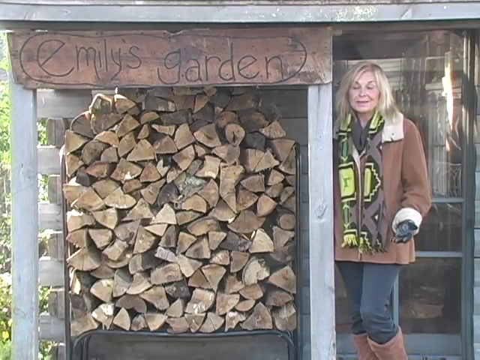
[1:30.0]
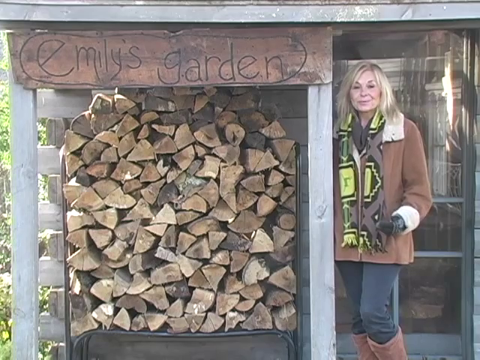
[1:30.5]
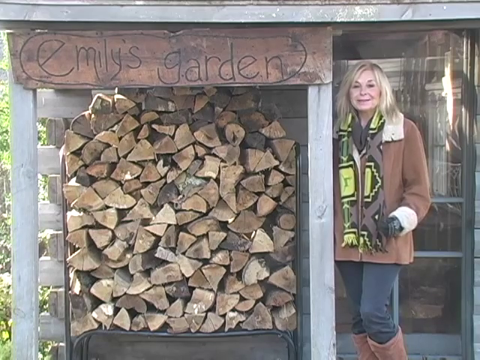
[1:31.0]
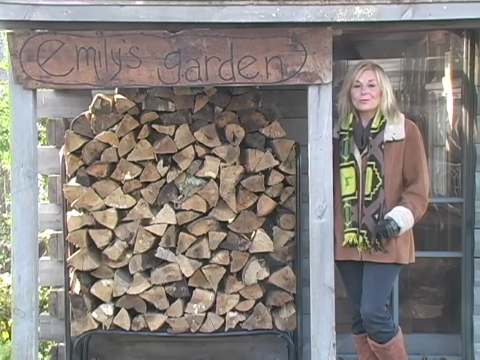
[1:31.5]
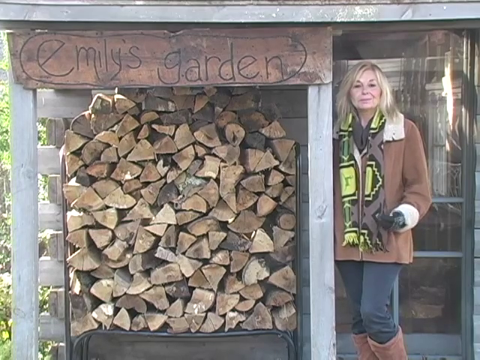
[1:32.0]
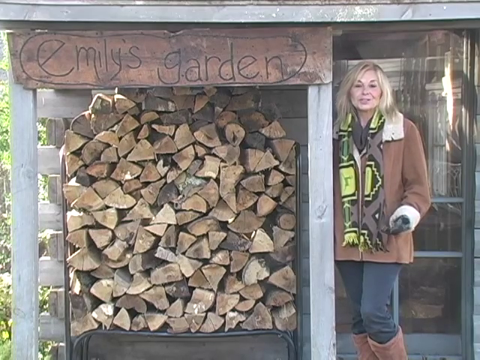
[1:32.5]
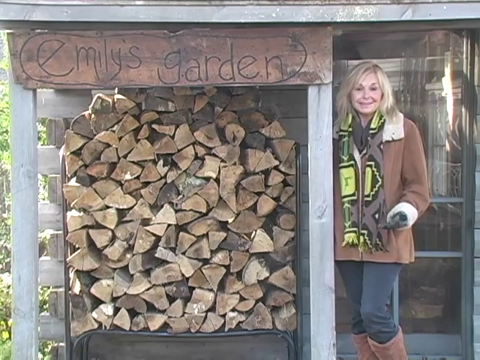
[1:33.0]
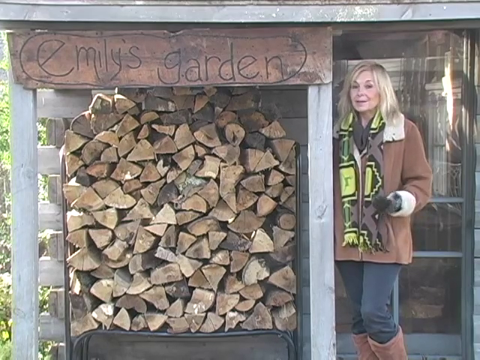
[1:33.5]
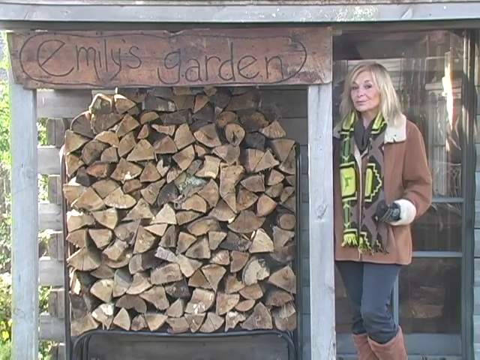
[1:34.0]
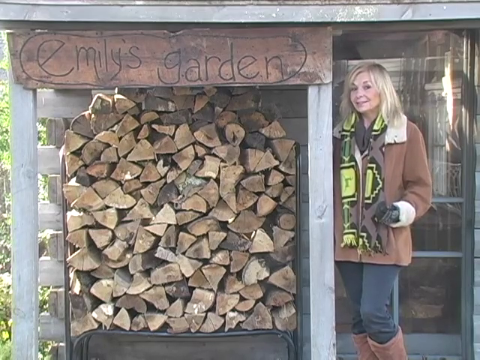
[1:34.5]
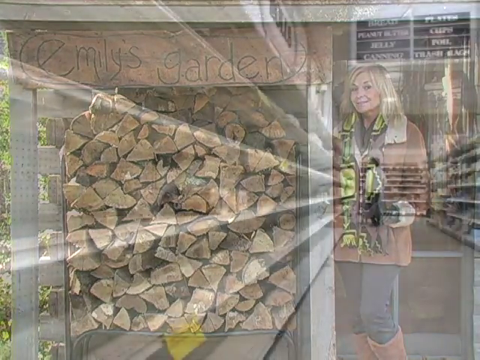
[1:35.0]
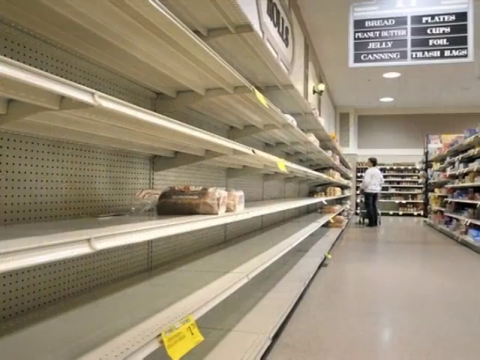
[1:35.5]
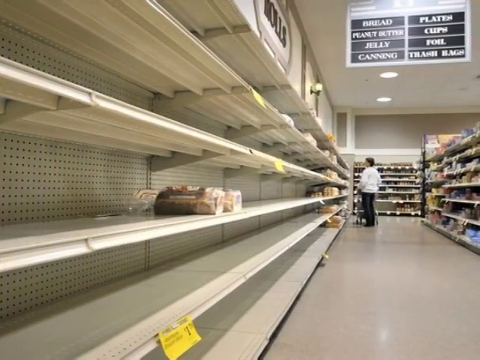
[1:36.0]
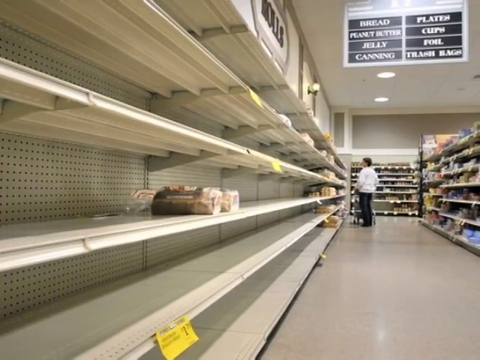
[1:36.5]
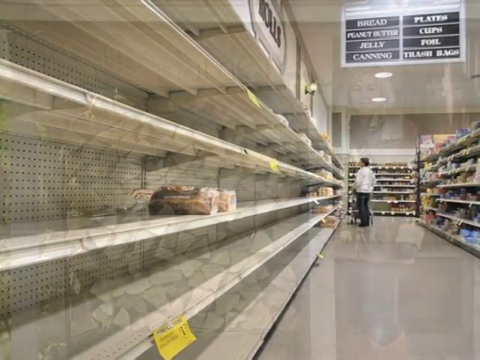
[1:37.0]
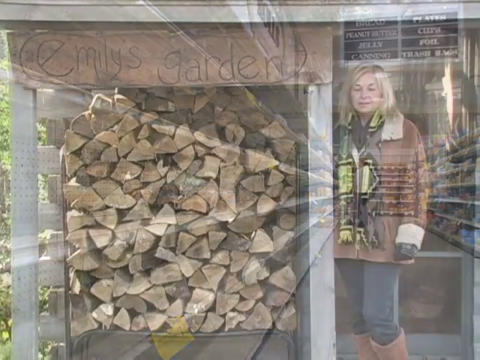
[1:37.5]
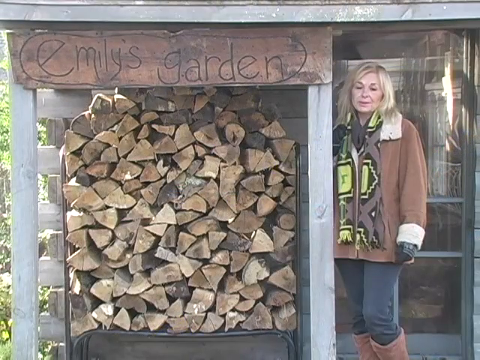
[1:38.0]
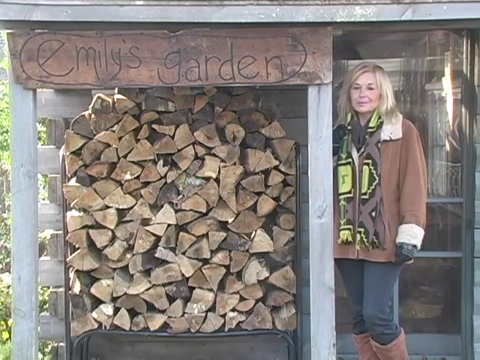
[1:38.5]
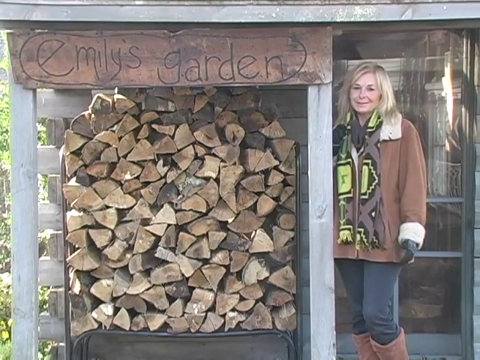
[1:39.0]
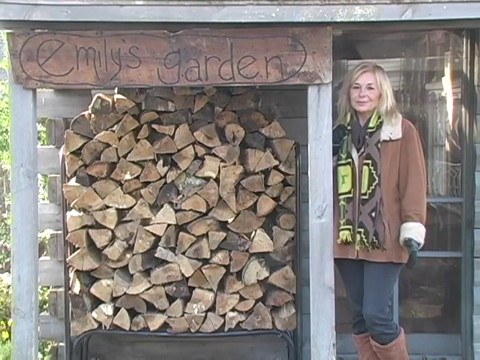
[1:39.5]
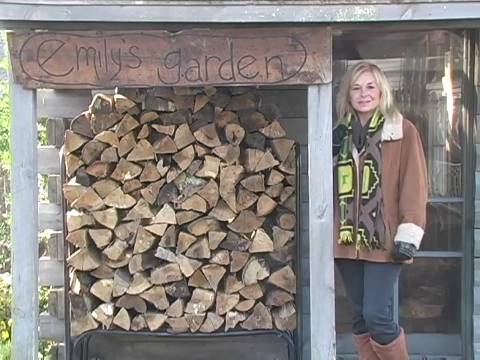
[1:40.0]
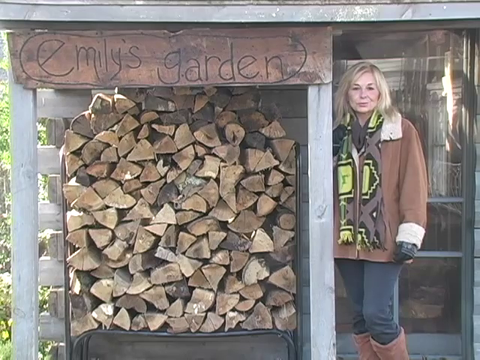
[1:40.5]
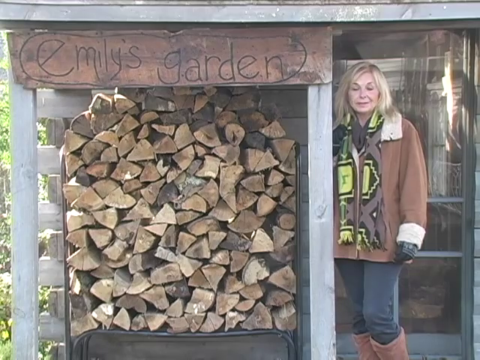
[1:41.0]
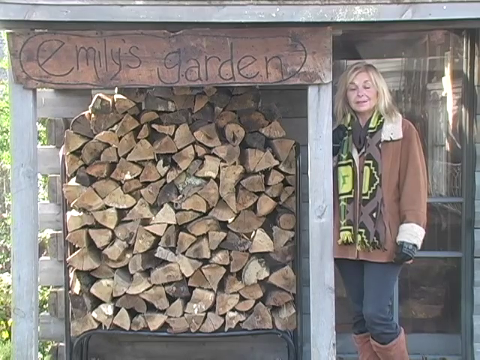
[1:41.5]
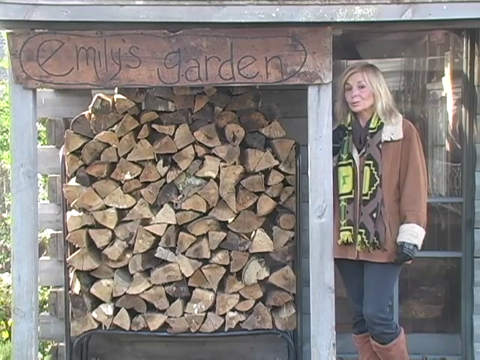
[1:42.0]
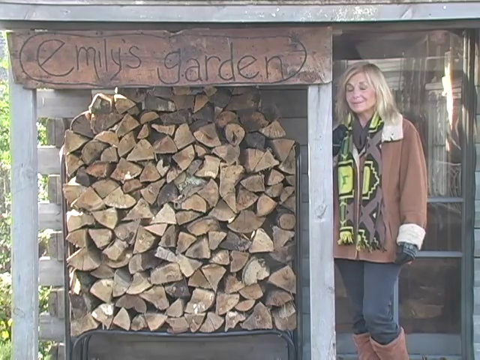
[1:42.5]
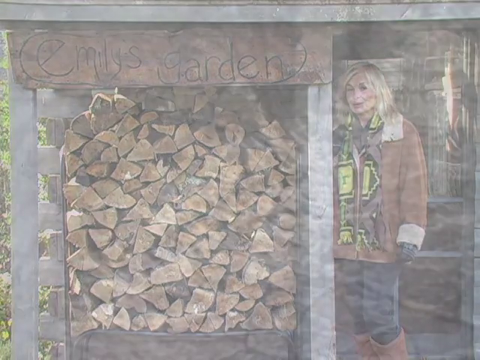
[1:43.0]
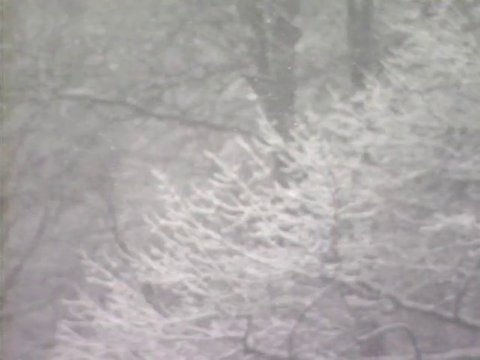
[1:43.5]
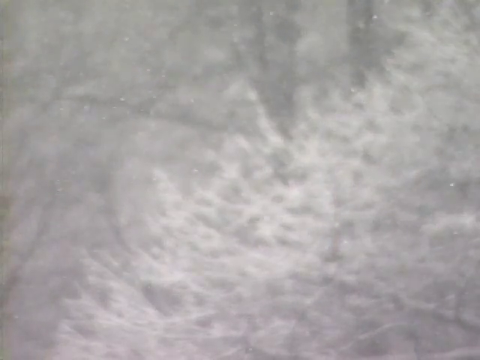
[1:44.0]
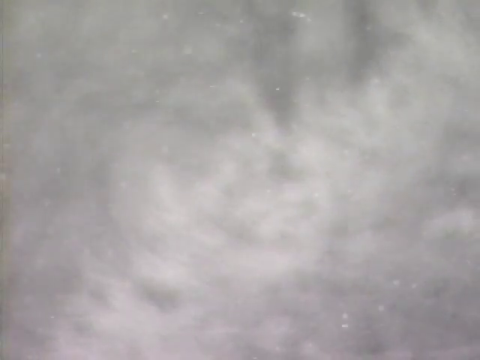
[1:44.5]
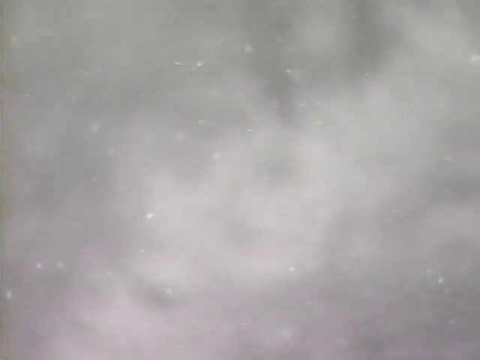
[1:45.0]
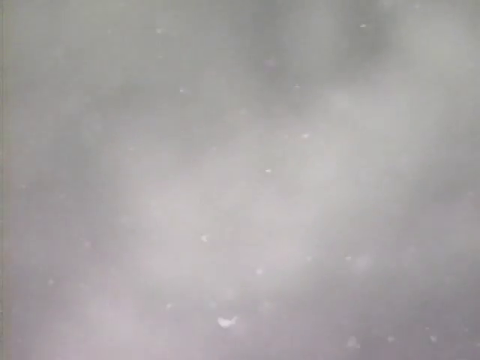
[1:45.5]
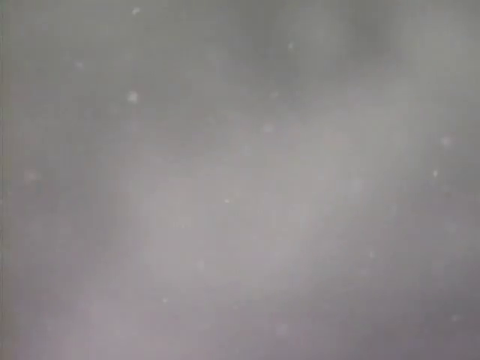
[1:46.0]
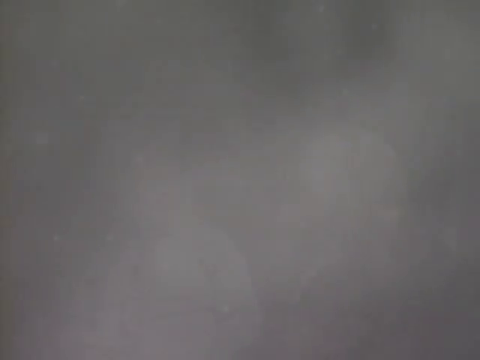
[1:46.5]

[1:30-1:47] The woman wears a brown jacket, a green and brown scarf with some black designs on it, gloves and brown boots, standing next to a grey structure with a glass door. The grey structure says "Emmys Garden", and wood logs are under the Emmys Garden poster. The video switches to footage showing only two breads, with the woman behind. It switches back to the blonde woman in the brown jacket, who is talking again, and then to a video of a snowstorm with people in it.